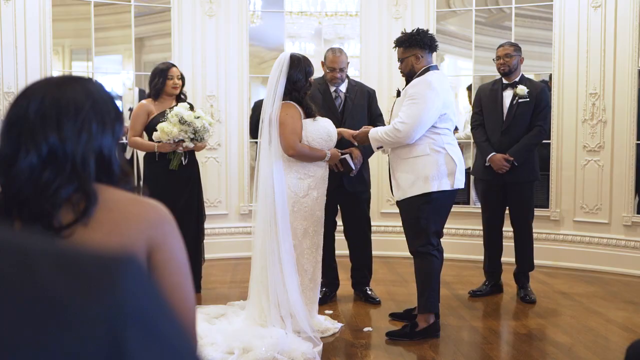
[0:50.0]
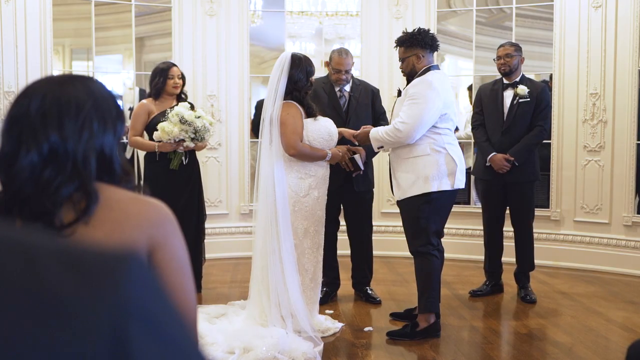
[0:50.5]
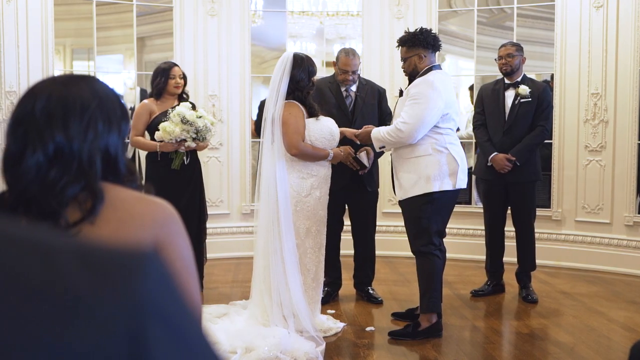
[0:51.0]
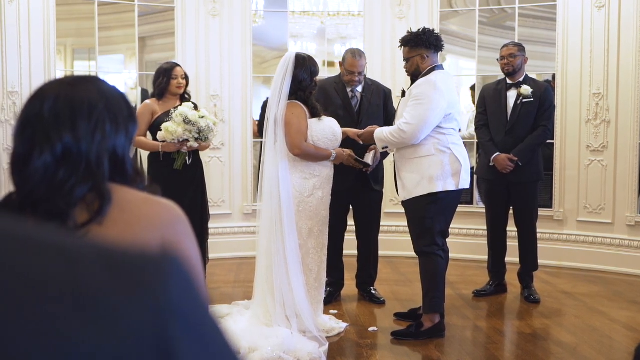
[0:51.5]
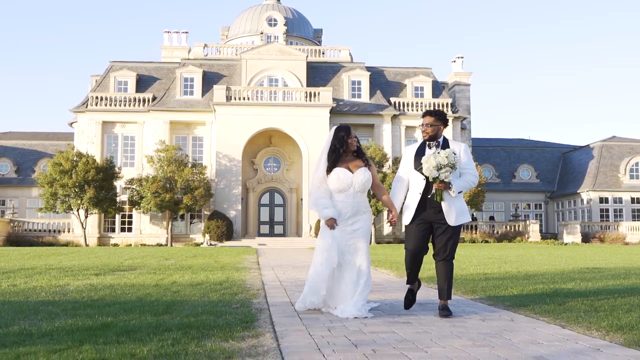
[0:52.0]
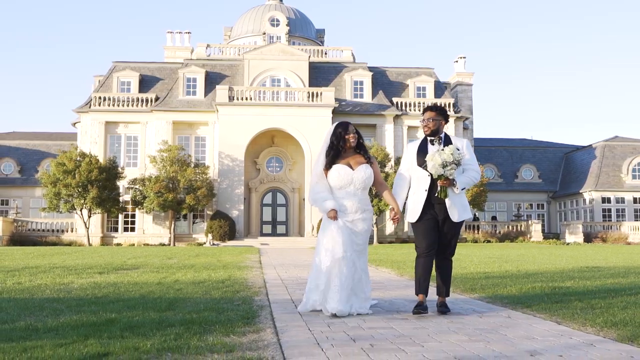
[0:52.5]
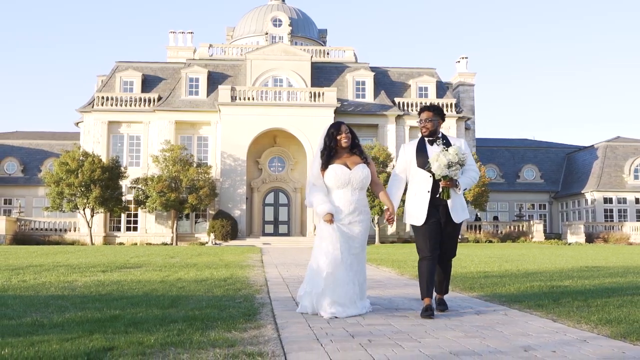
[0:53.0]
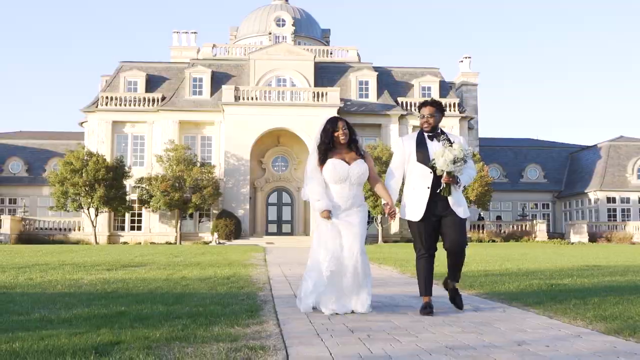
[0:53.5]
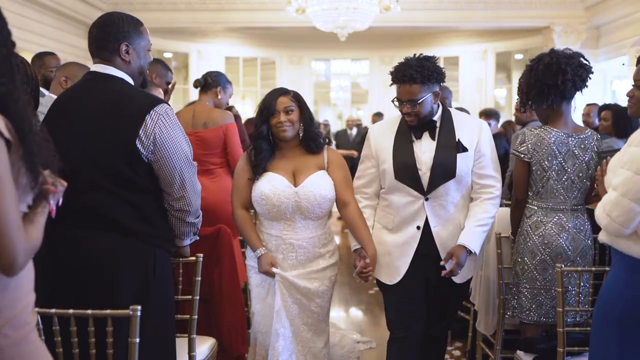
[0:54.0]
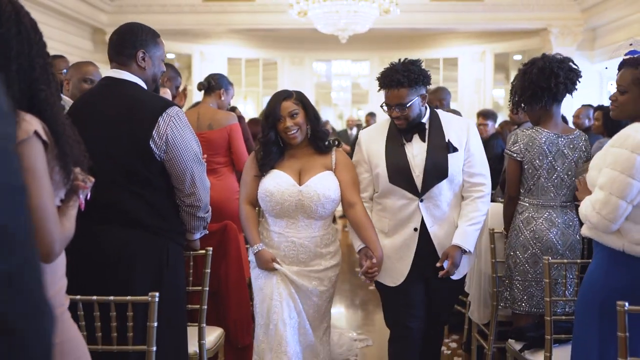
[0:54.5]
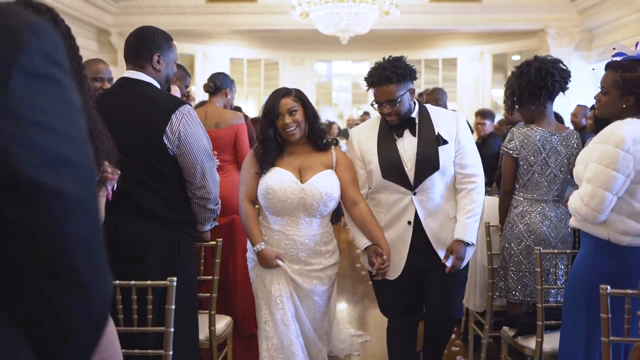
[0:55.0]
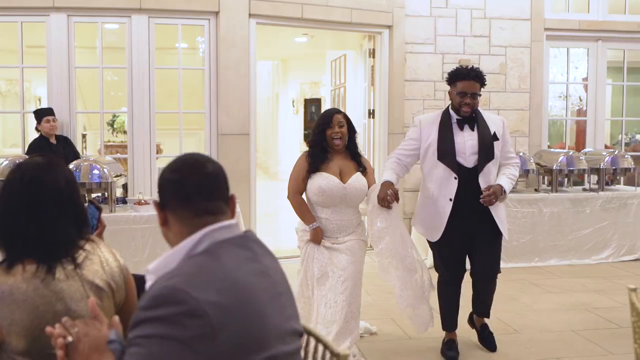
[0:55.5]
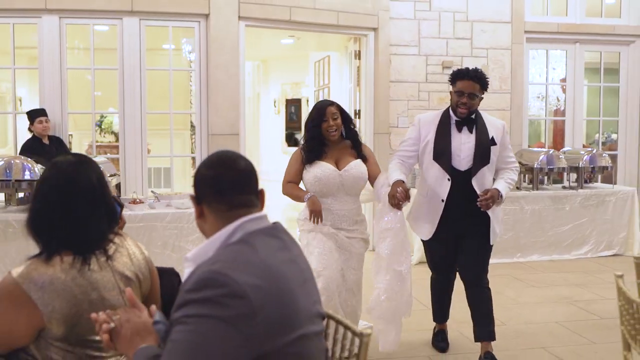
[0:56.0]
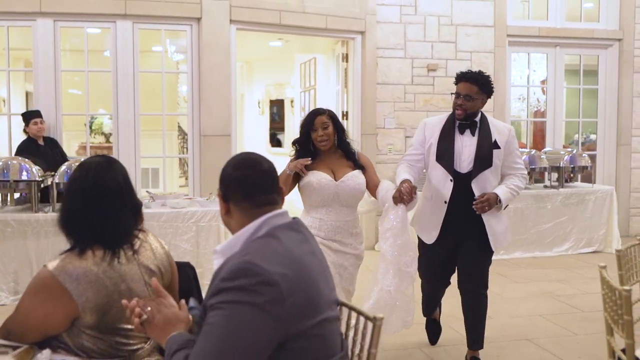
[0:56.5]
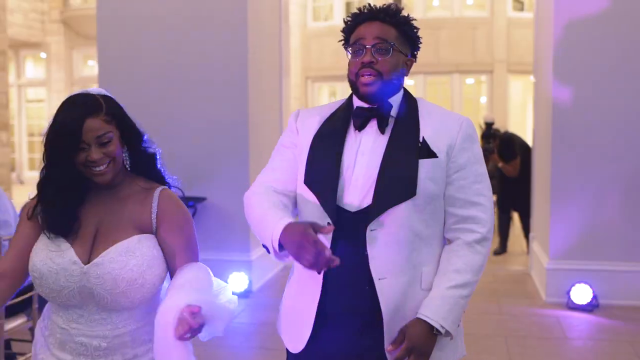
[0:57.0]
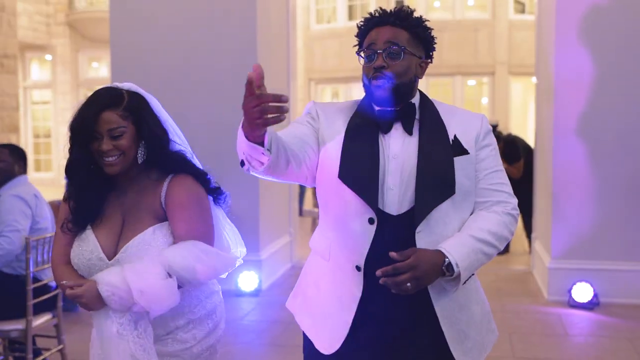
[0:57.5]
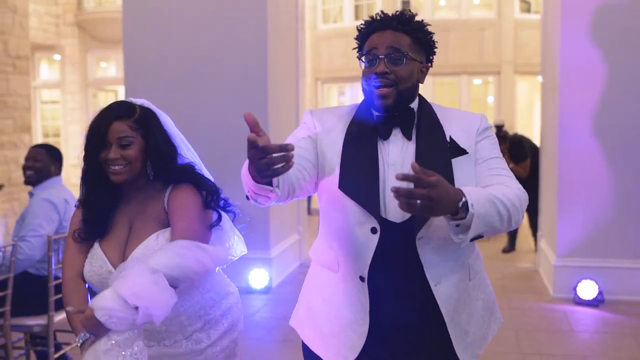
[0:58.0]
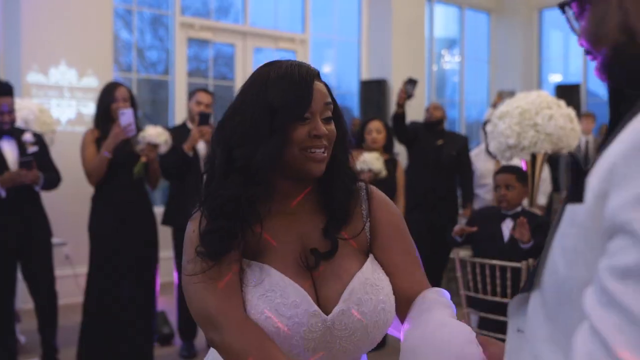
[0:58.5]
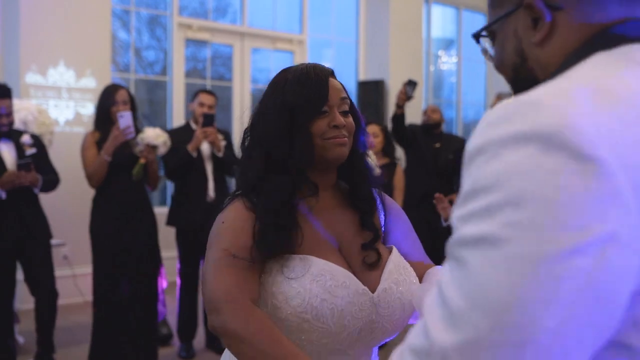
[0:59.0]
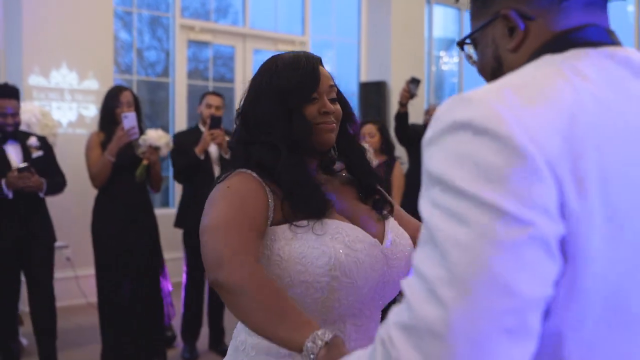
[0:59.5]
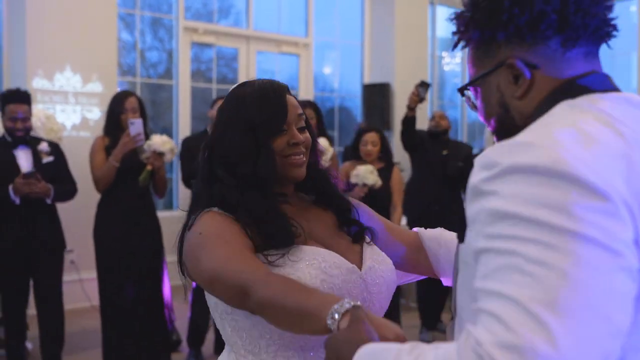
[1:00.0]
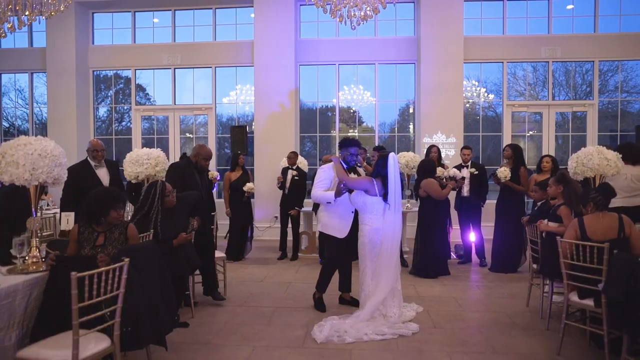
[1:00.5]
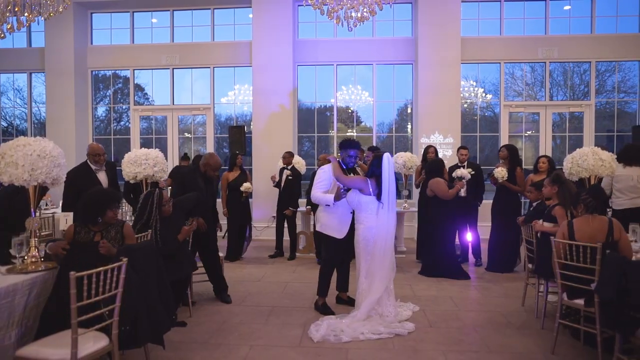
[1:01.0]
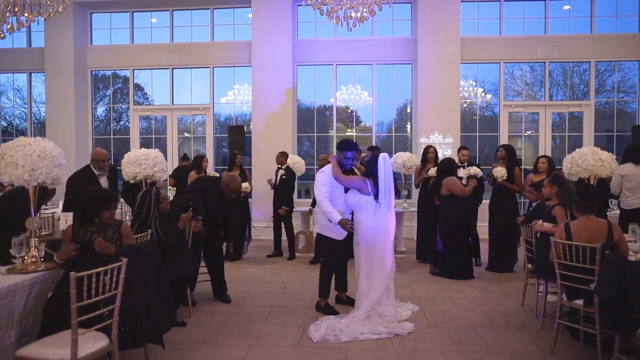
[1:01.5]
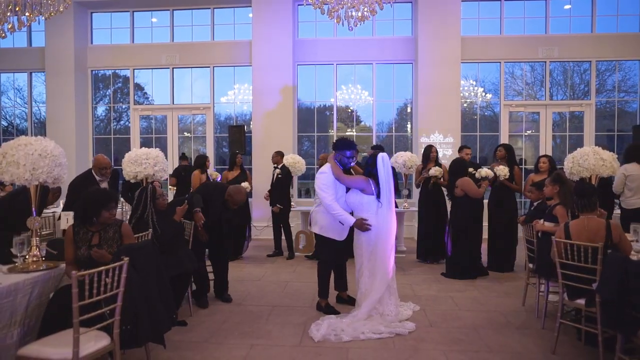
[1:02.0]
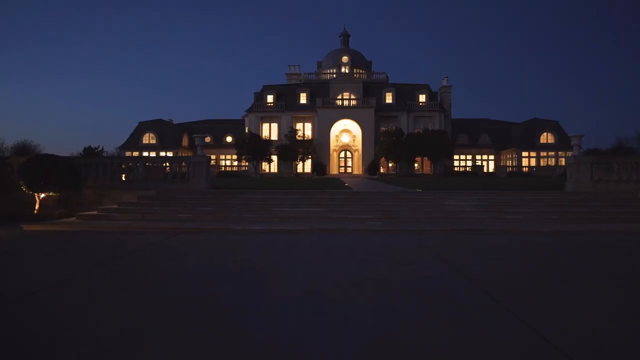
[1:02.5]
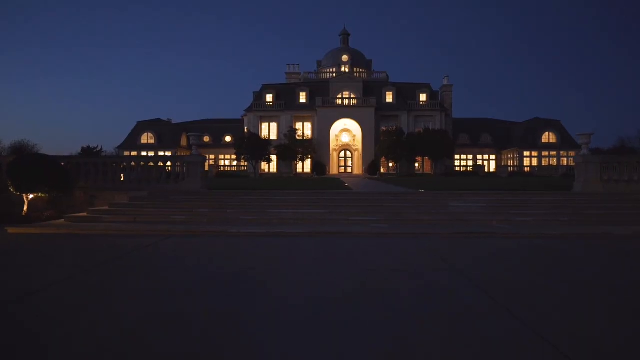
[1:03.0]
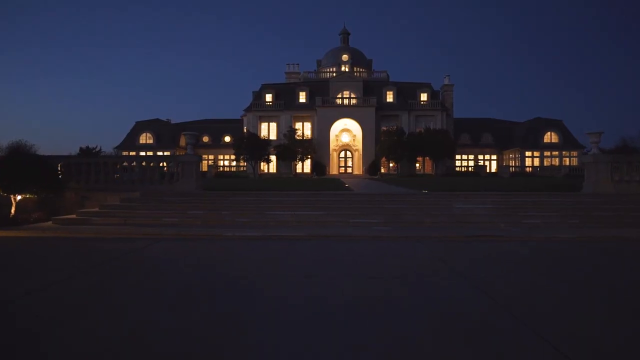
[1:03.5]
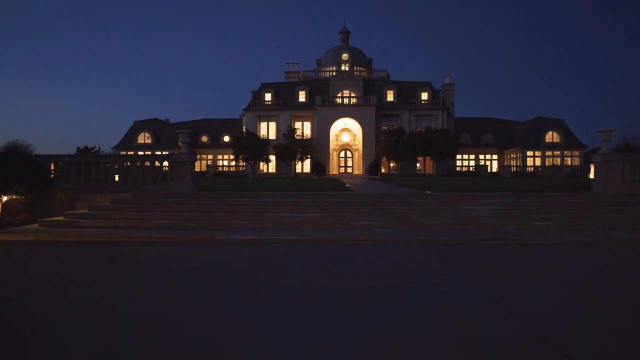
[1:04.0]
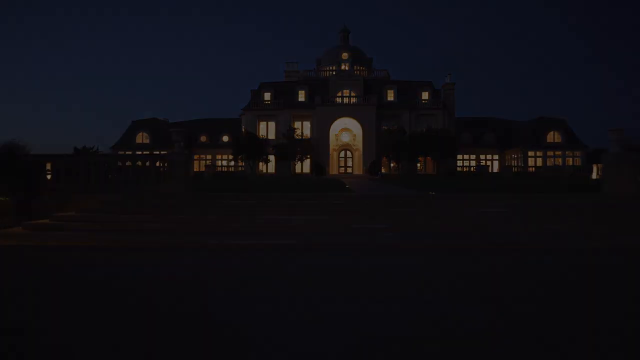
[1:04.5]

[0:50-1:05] The groom and bride stand in front of the congregation, exchanging rings and smiling at each other; they seem very happy. Guests are seen on either side, followed by a close-up of the couple. One of the bridesmaids on the left holds the bouquet of flowers, and the preacher stands in the middle behind them holding what looks like a Bible. Next, the married couple walks down the pathway in front of the mansion, the groom holding her bouquet, the bride looking very happy. The couple then walks out of the hall holding hands, the bride lifting her wedding dress with her right hand, smiling at the guests as they pass. They enter the dining or banquet hall, where guests are already seated at tables. In the background are tables with white tablecloths and bain maries and warmers holding the food for the wedding party. The groom and bride dance in front of everybody on the dance floor. It is getting dark, and pink lights are seen in the hall. The video ends with an outside view of the mansion in the dark, lit up with the lights on inside.